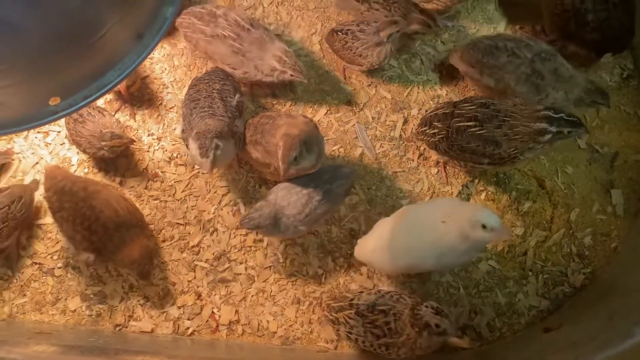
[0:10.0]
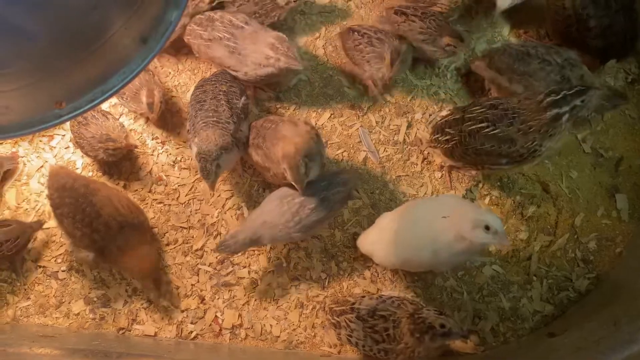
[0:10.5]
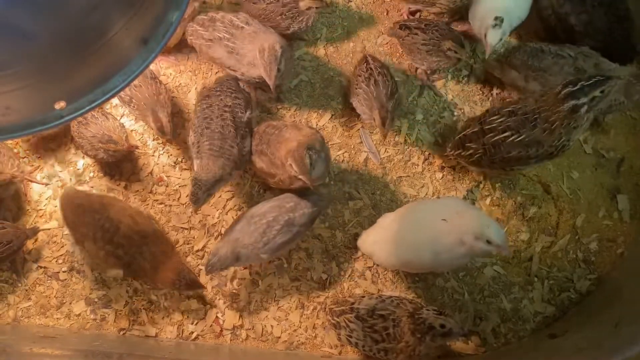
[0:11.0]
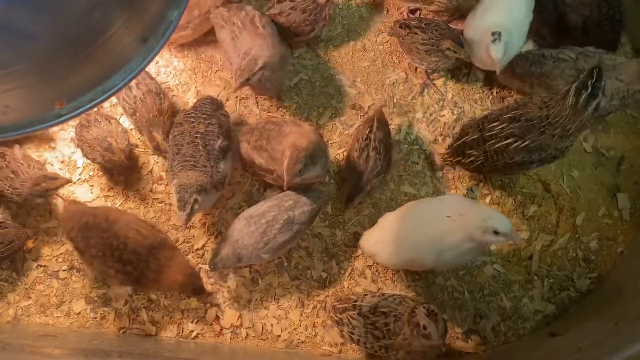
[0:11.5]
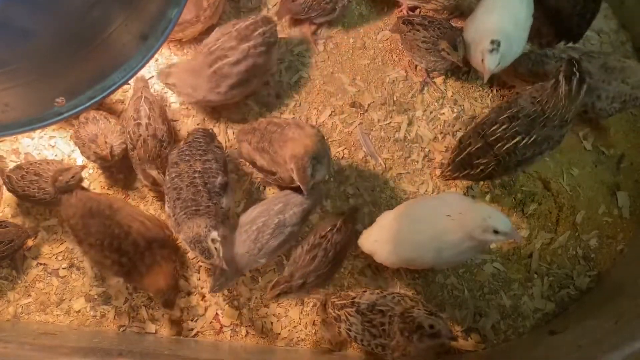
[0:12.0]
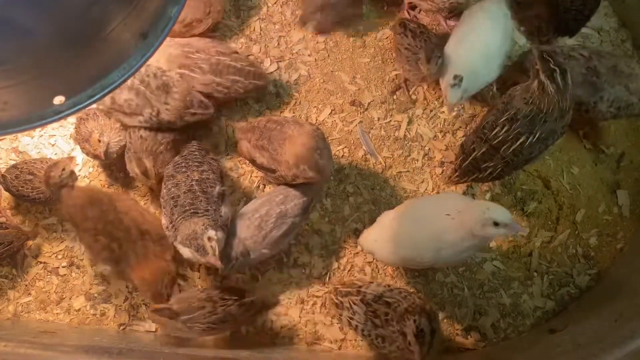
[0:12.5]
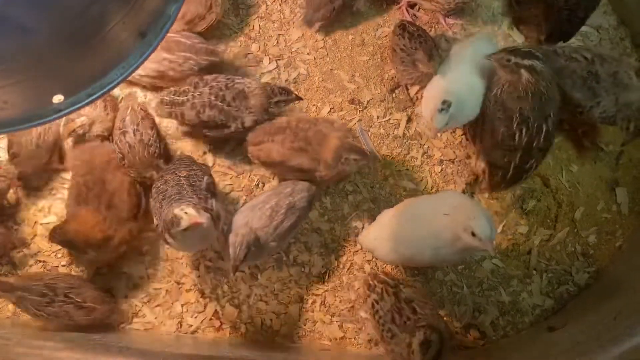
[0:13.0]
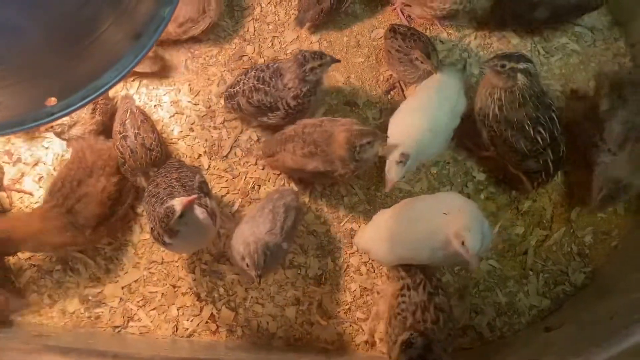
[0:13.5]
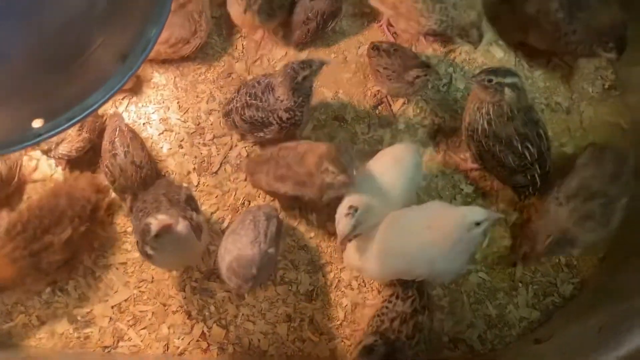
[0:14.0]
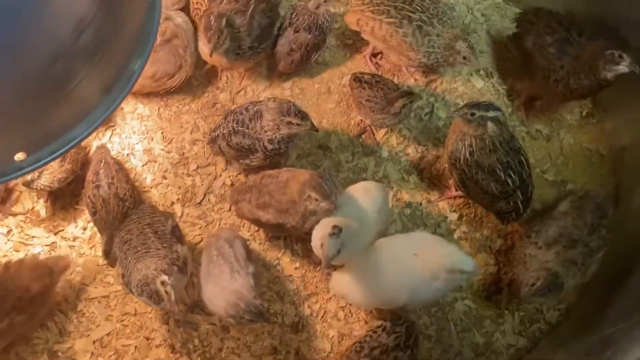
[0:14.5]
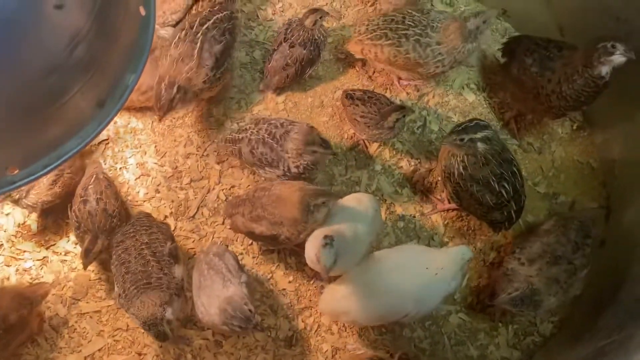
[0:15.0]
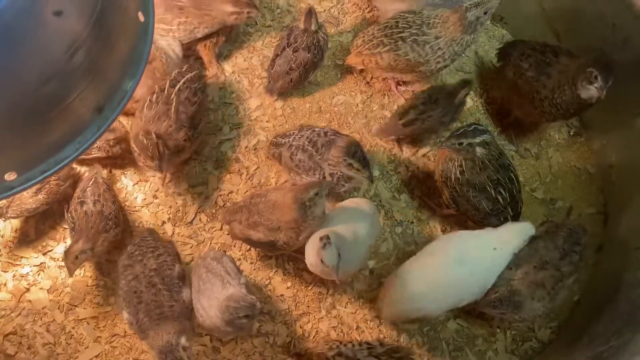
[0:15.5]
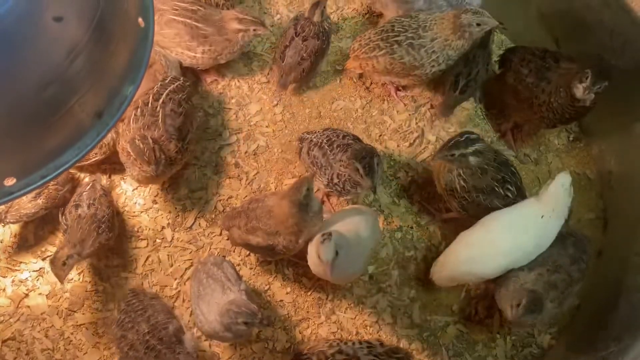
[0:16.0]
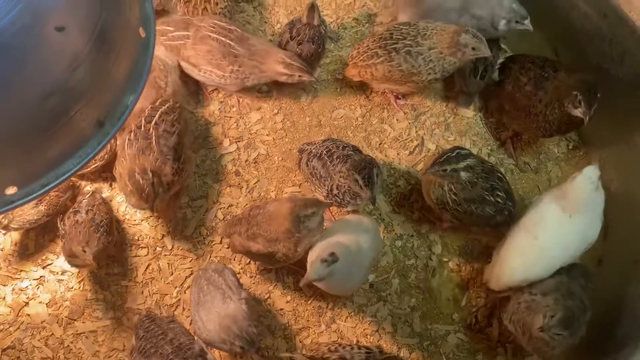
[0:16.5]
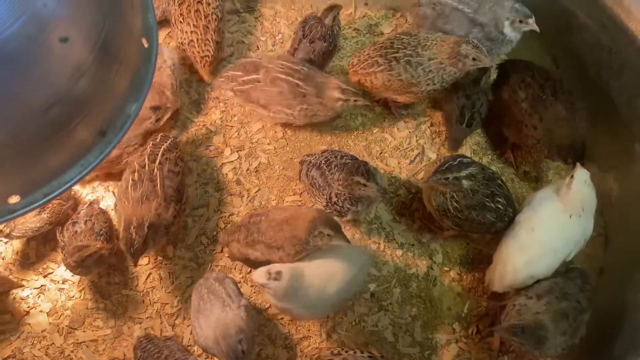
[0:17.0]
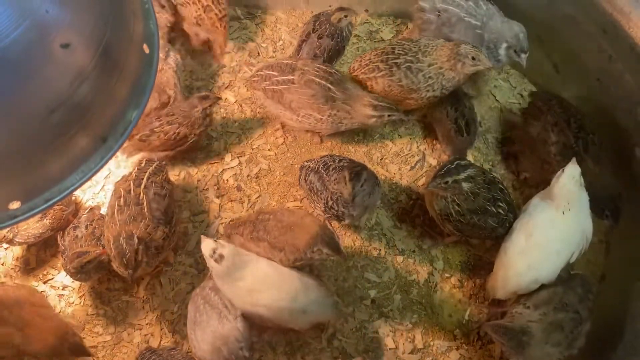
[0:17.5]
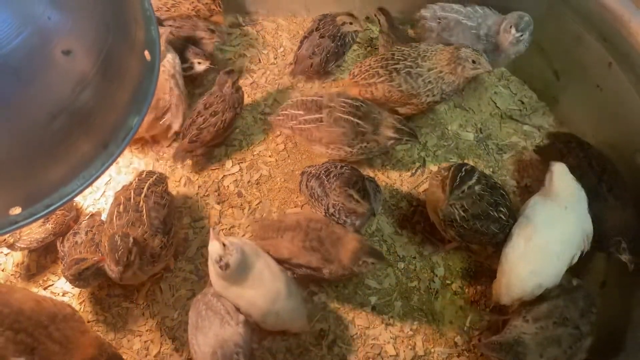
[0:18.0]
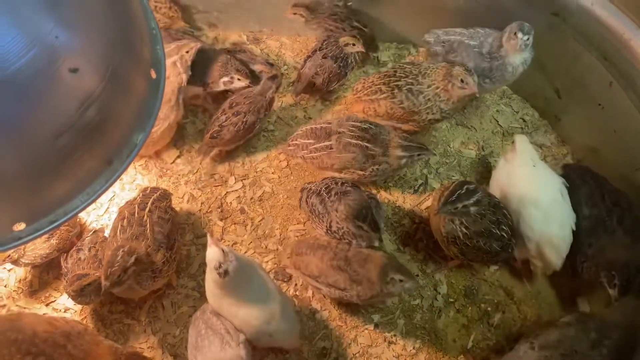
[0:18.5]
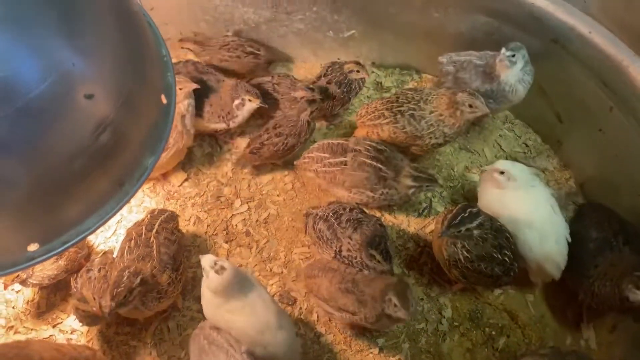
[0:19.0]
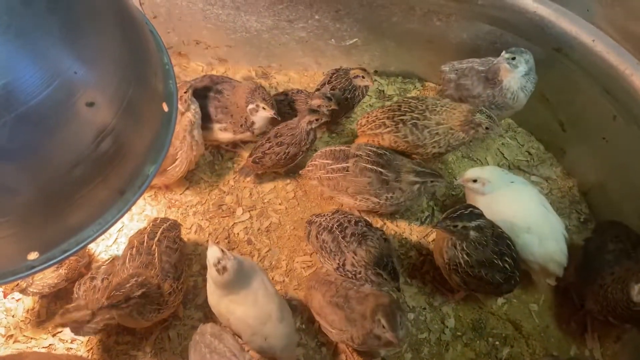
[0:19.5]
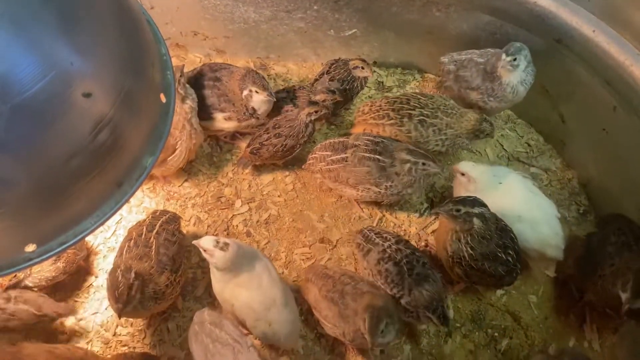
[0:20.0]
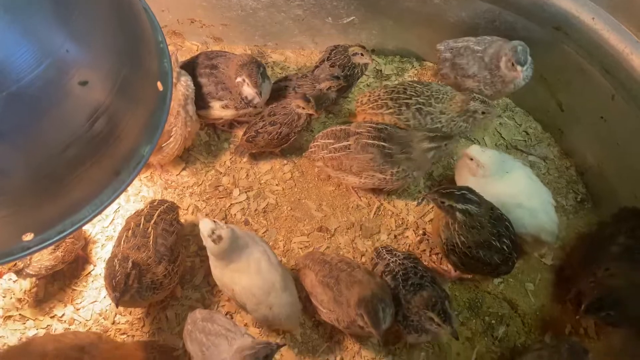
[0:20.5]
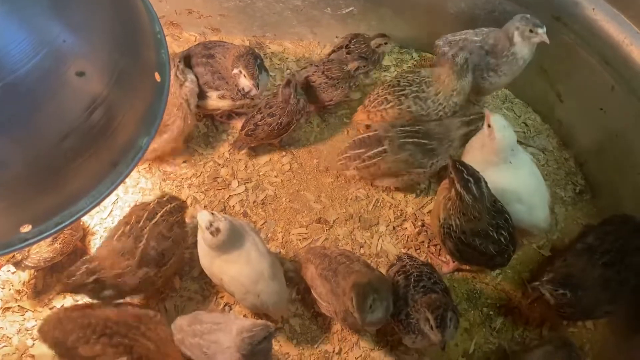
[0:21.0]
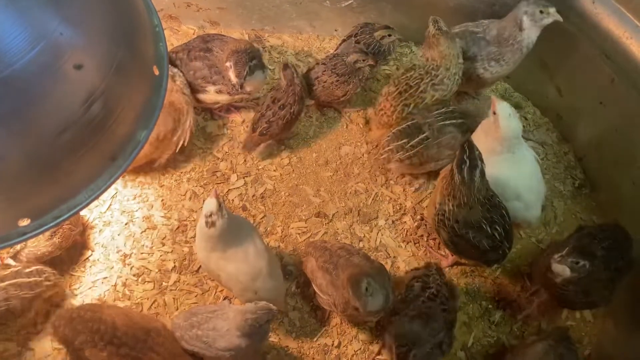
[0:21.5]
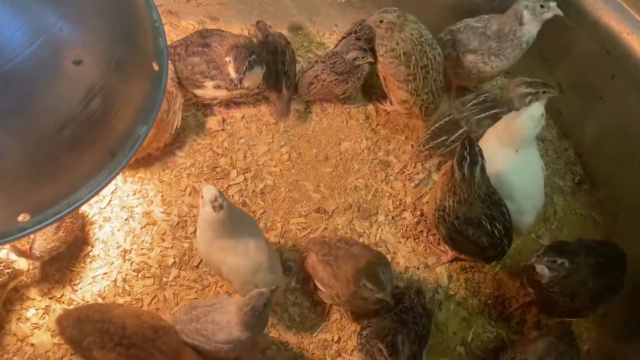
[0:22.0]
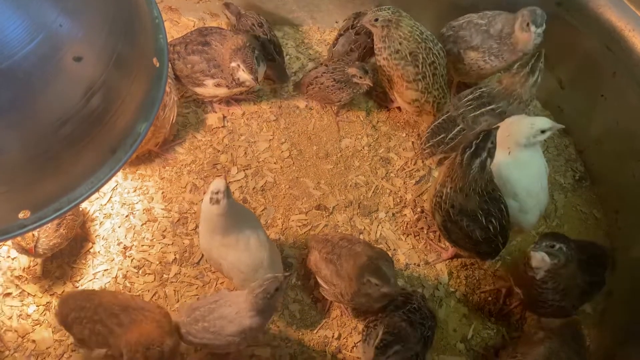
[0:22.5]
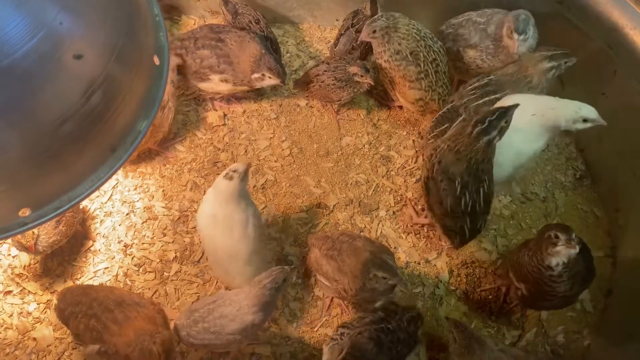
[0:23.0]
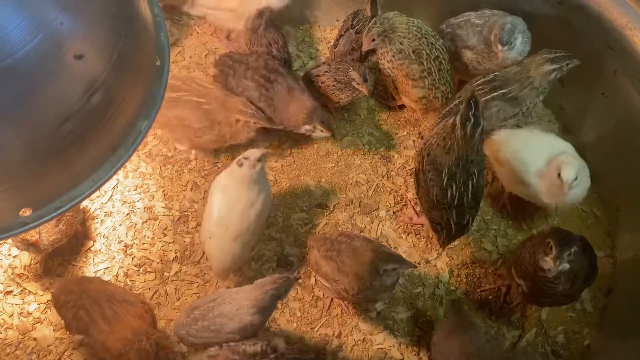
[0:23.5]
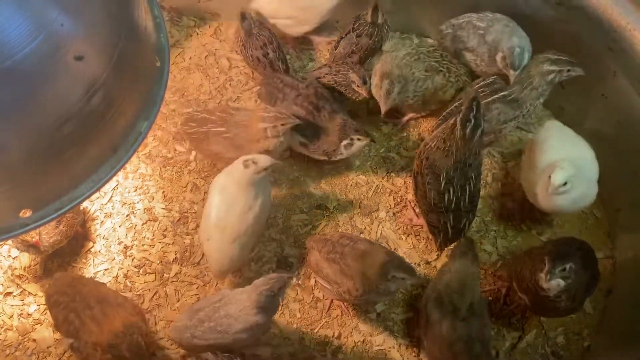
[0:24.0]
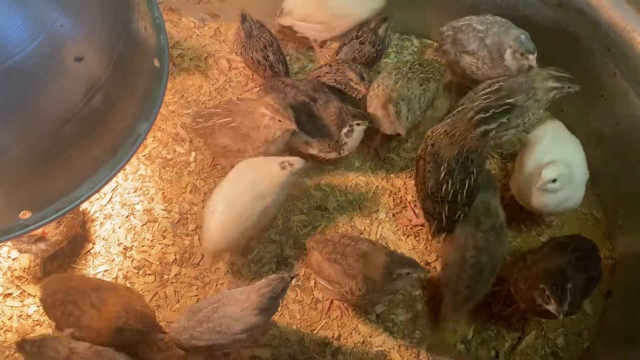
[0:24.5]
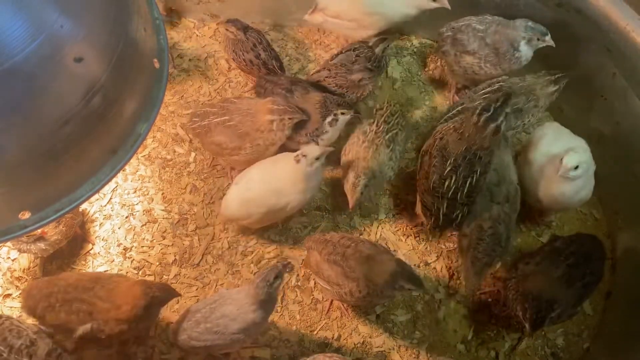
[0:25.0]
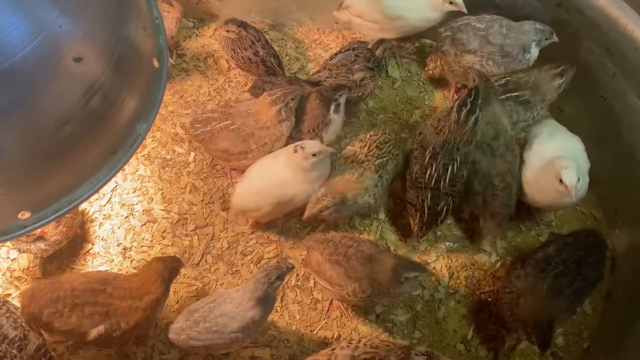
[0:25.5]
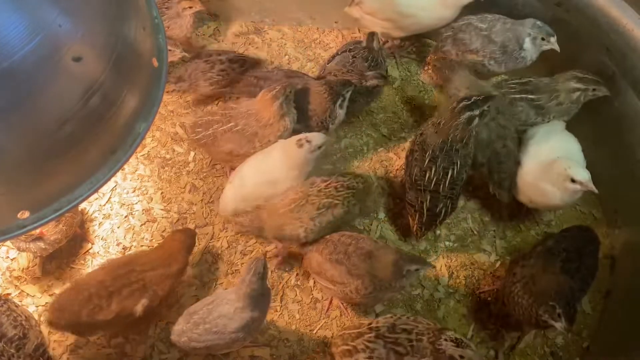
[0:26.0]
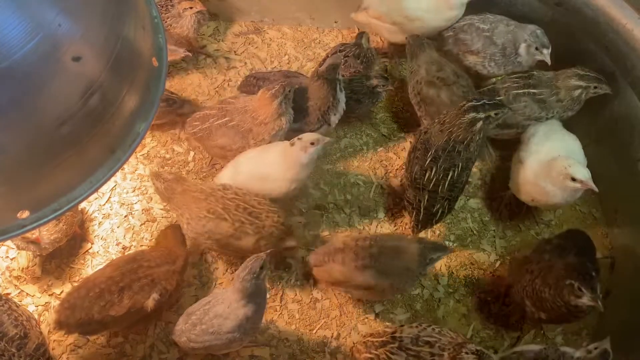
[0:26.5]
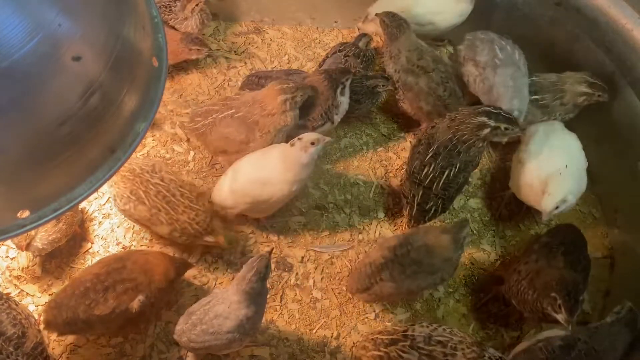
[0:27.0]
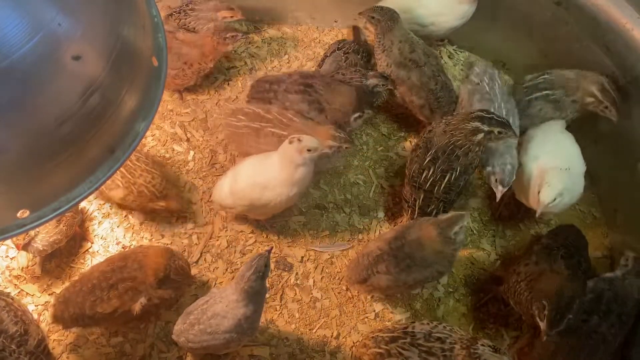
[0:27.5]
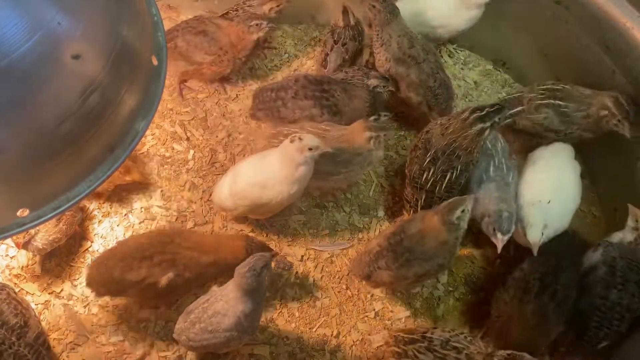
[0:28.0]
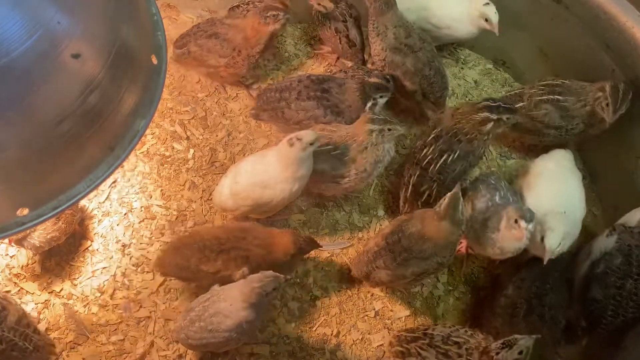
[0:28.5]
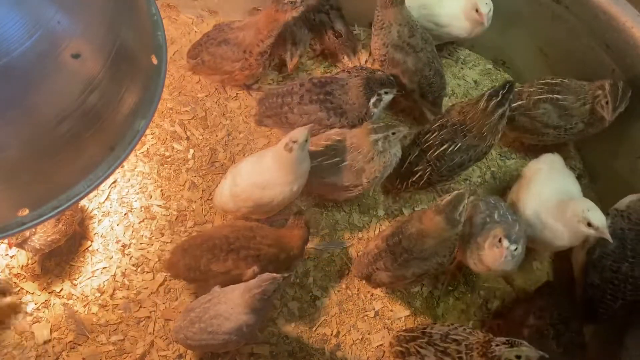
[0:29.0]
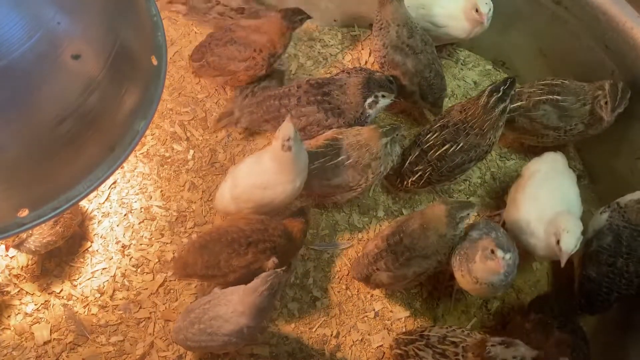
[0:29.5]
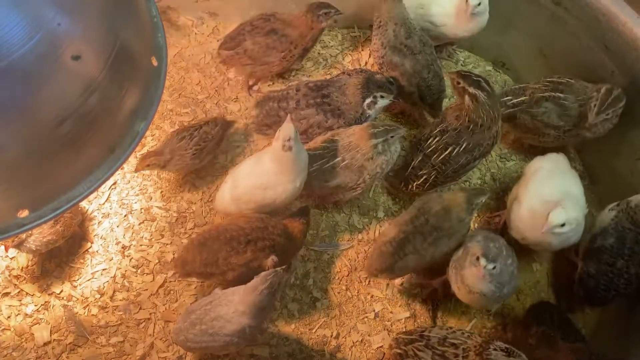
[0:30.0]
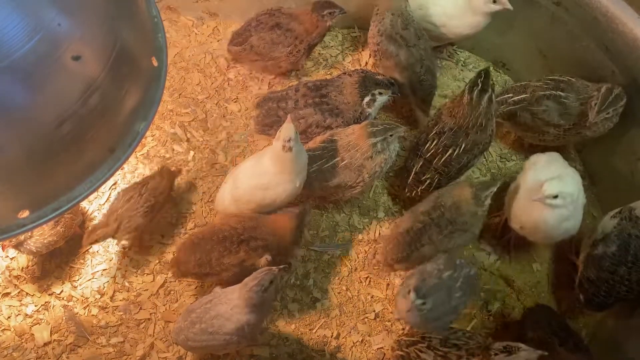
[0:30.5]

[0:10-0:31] About a dozen chicks move around, jostling and pecking at the ground. Their heads bob up and down as they peck, and they look up at the camera and from side to side, huddling together and jostling each other. They have little dark eyes and mottled brown plumage, with sawdust on the bottom. They are not fully grown, and their species is uncertain; they might be quails or possibly chickens. They mill about, huddling together and bobbing their heads up and down.